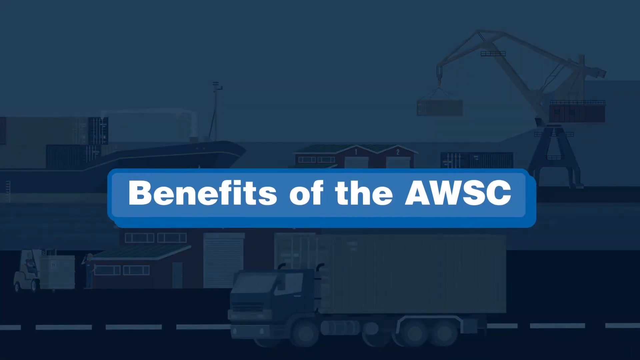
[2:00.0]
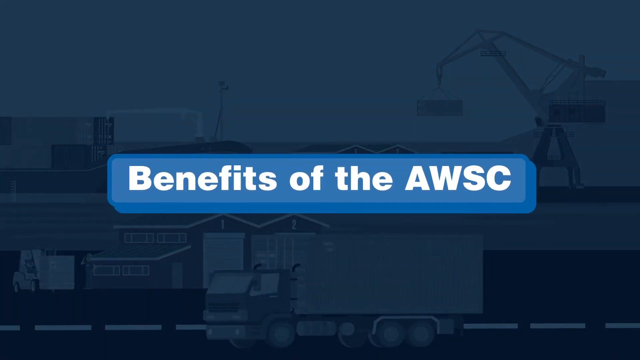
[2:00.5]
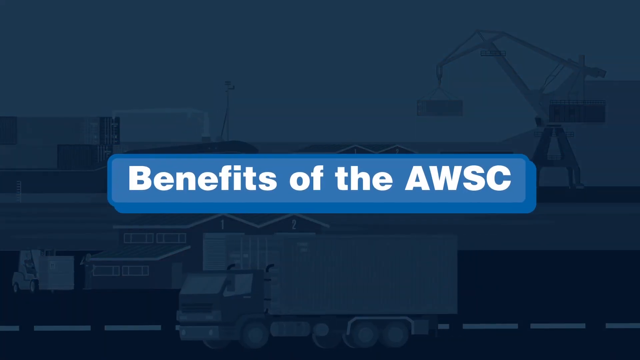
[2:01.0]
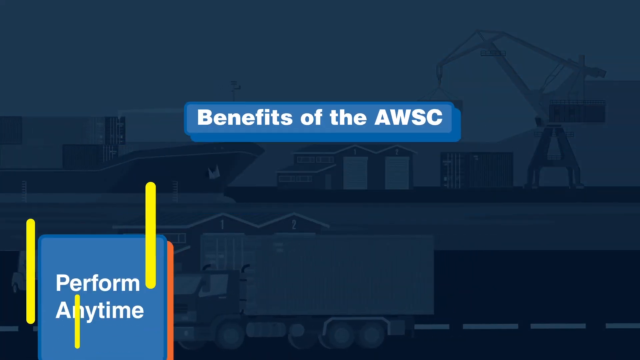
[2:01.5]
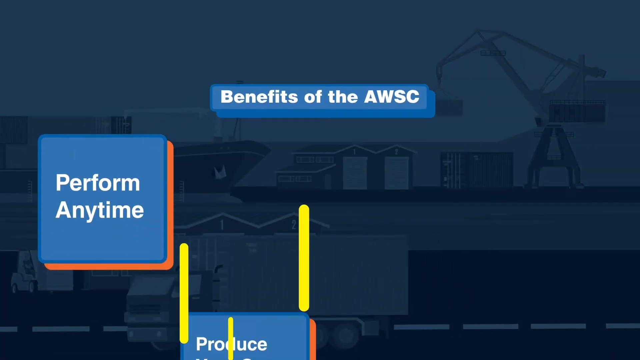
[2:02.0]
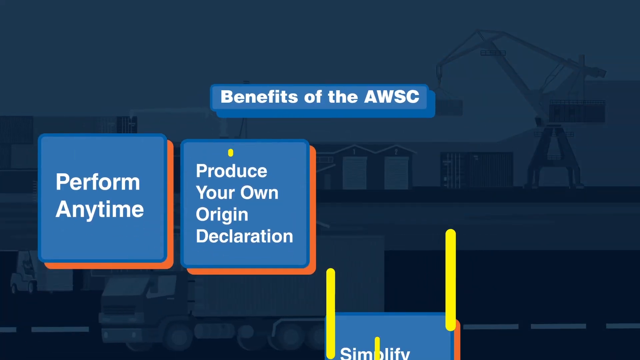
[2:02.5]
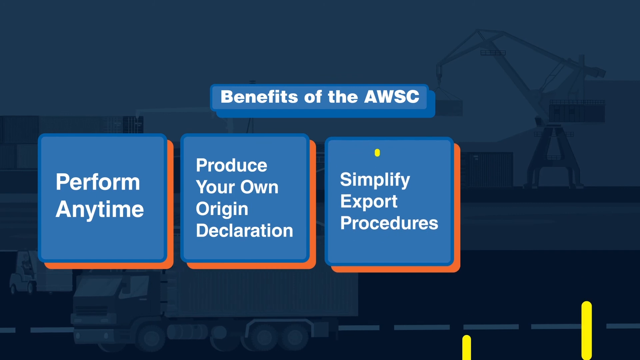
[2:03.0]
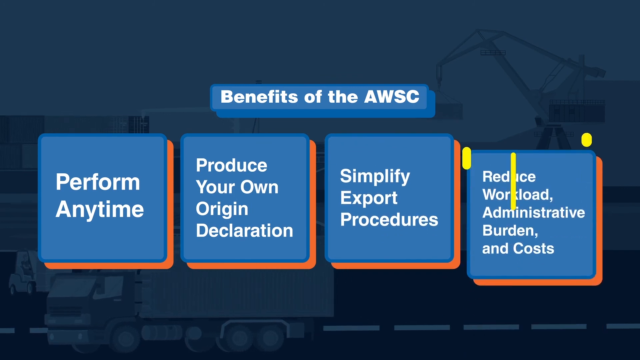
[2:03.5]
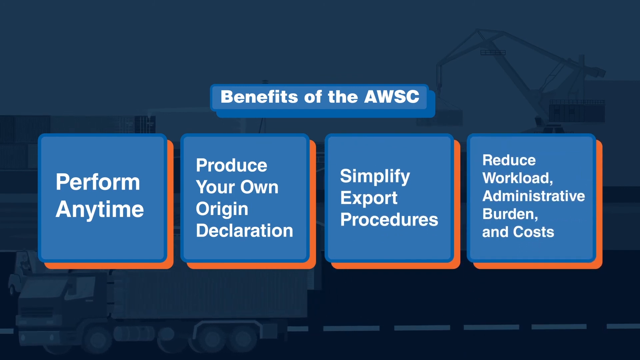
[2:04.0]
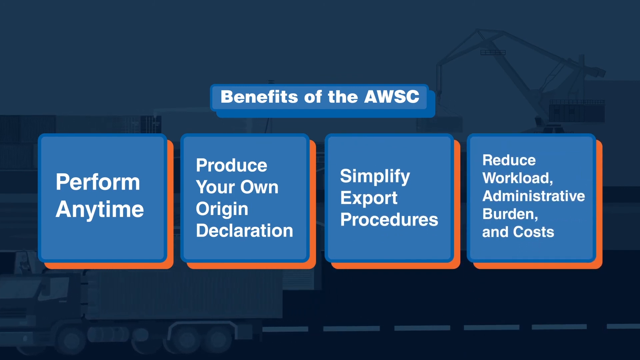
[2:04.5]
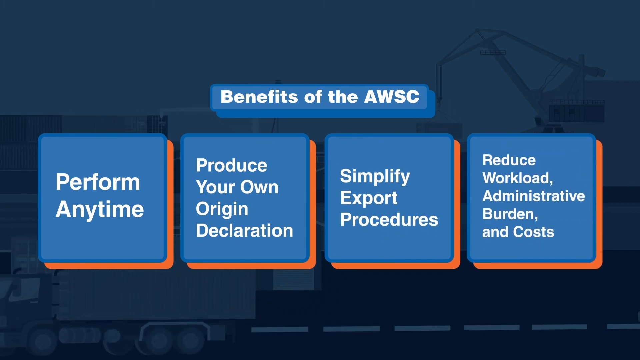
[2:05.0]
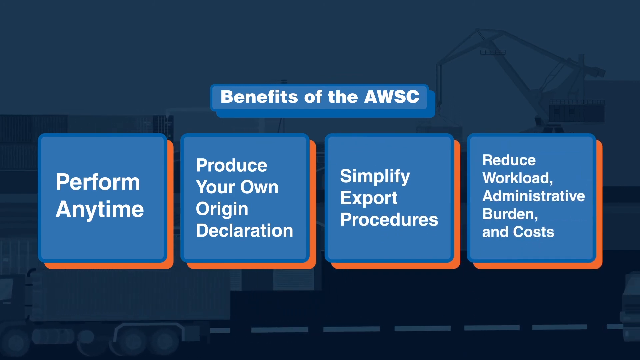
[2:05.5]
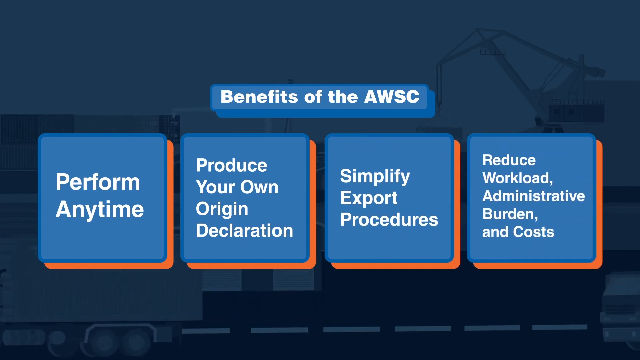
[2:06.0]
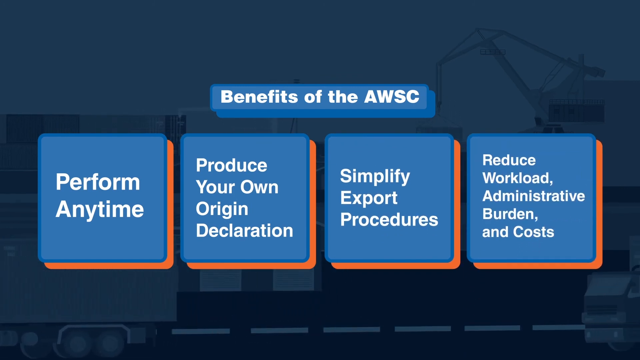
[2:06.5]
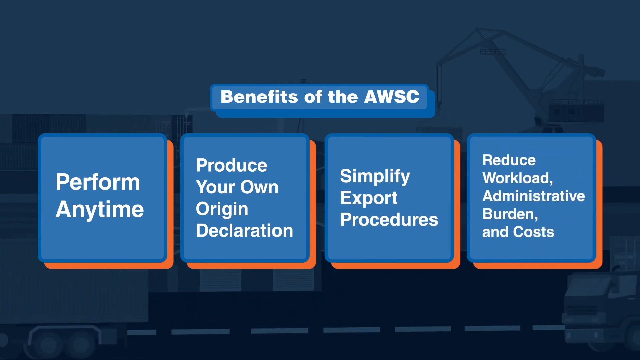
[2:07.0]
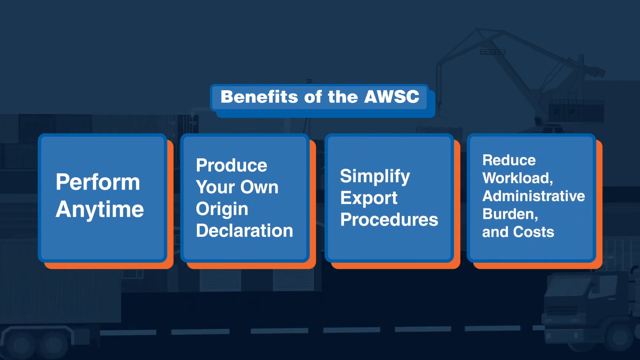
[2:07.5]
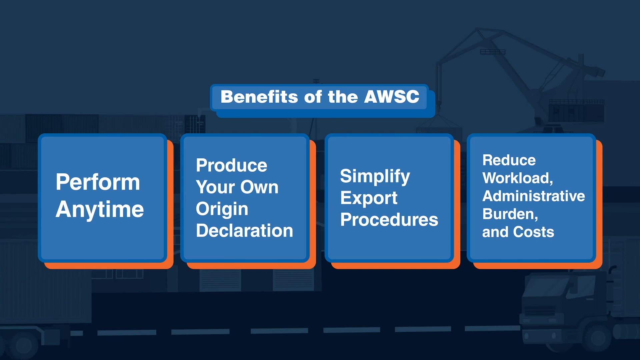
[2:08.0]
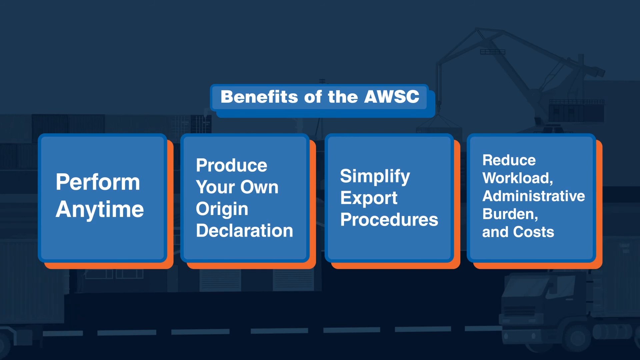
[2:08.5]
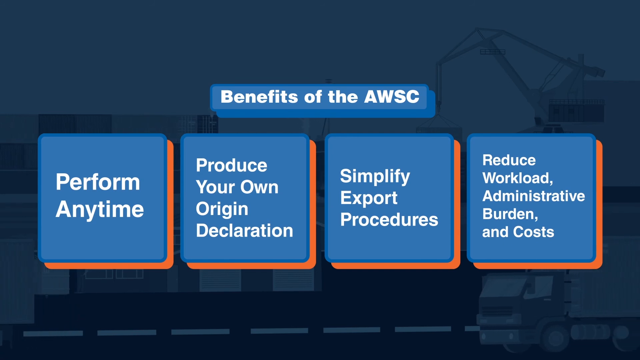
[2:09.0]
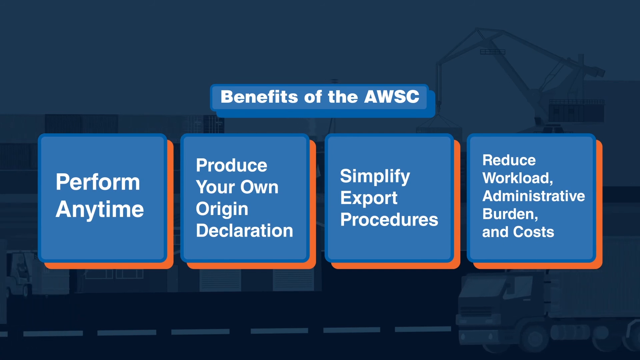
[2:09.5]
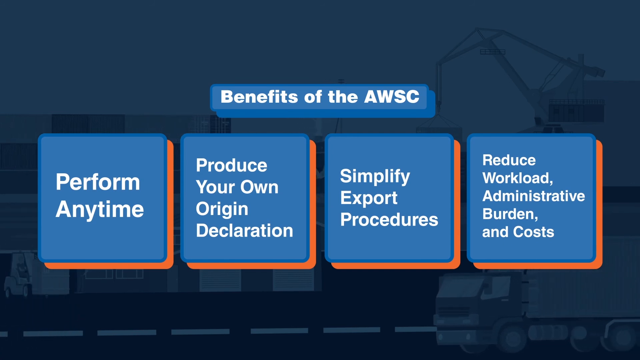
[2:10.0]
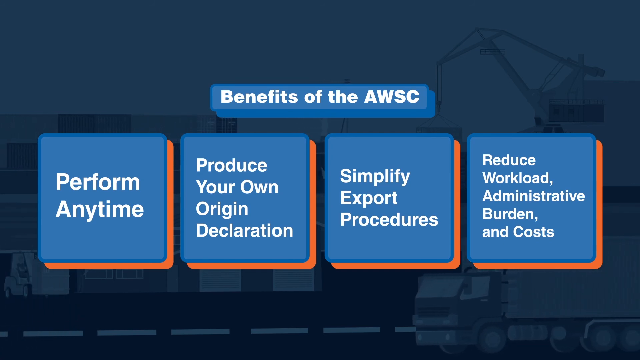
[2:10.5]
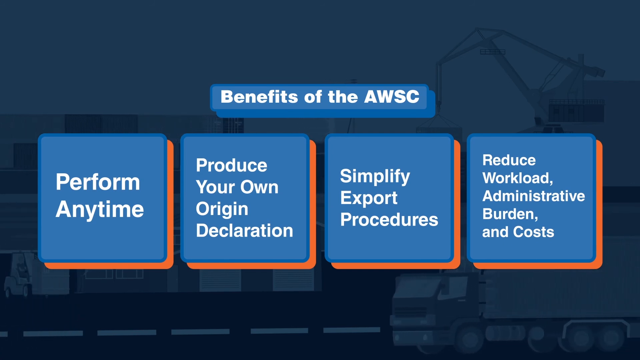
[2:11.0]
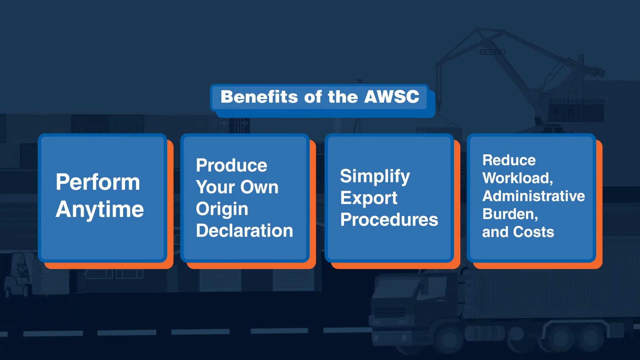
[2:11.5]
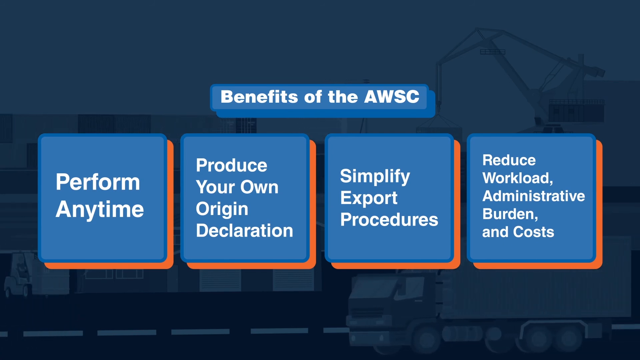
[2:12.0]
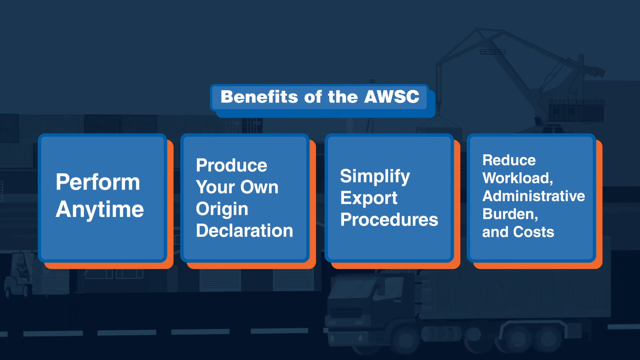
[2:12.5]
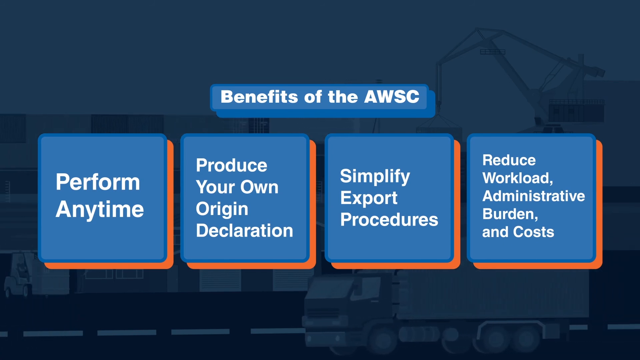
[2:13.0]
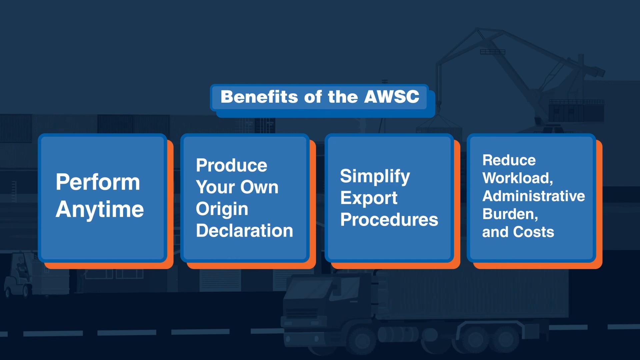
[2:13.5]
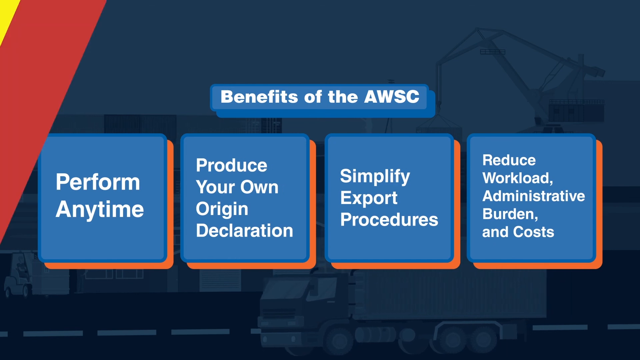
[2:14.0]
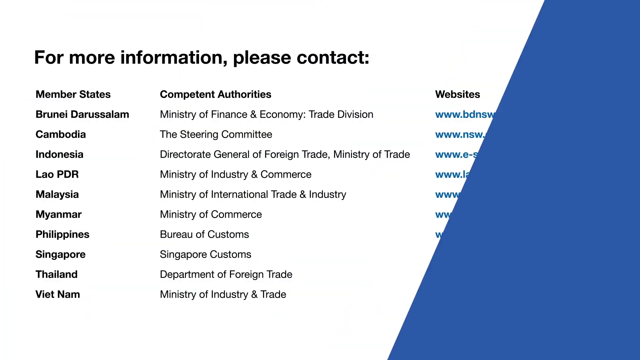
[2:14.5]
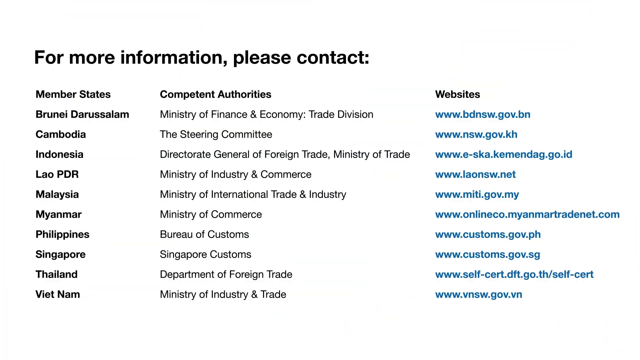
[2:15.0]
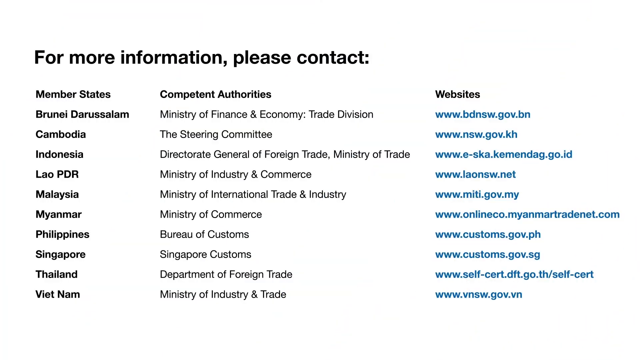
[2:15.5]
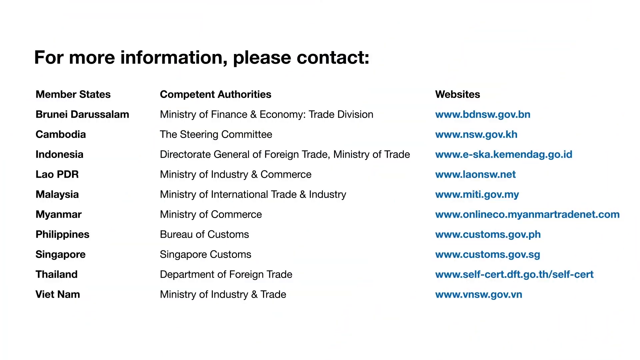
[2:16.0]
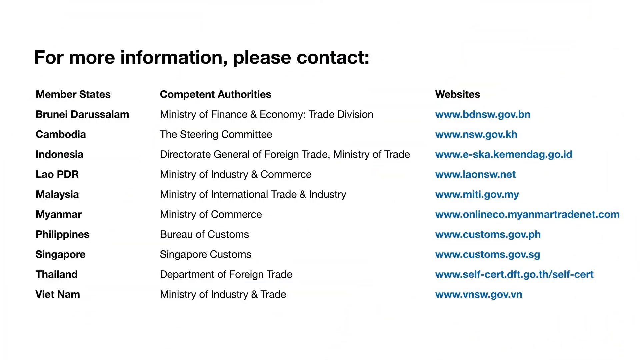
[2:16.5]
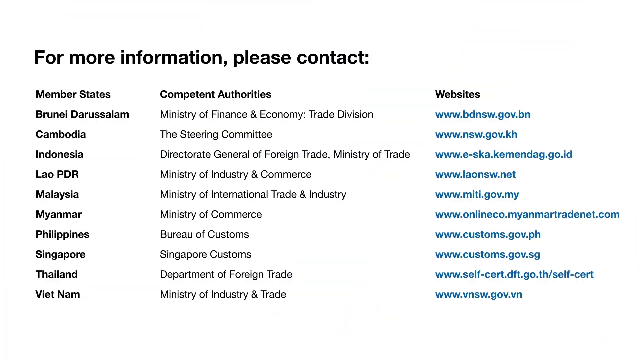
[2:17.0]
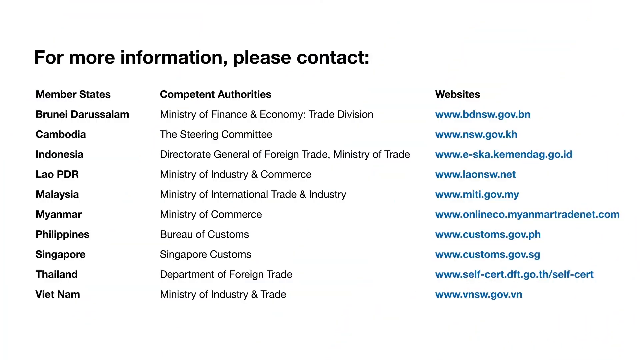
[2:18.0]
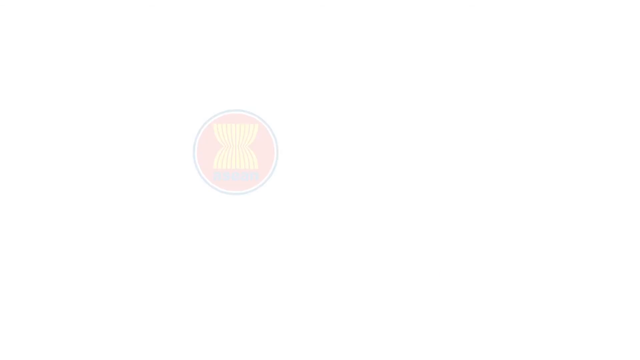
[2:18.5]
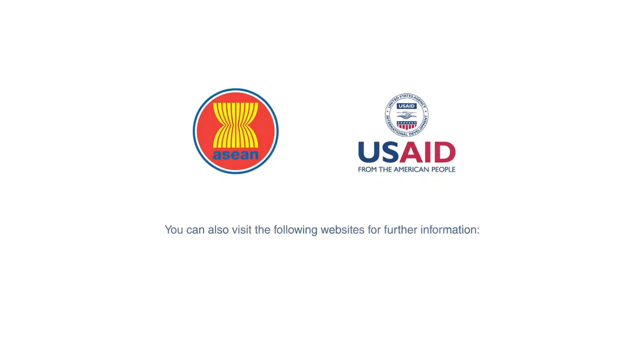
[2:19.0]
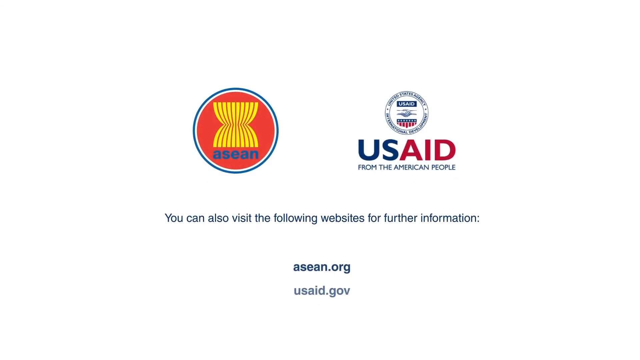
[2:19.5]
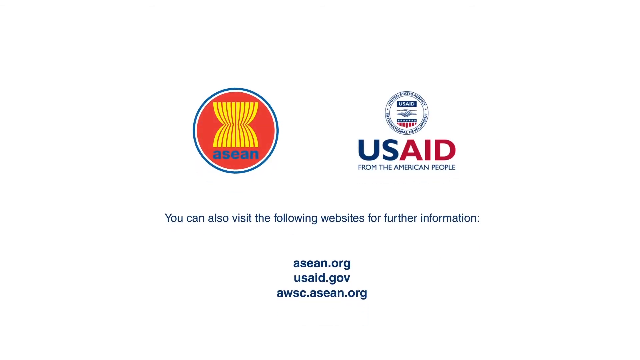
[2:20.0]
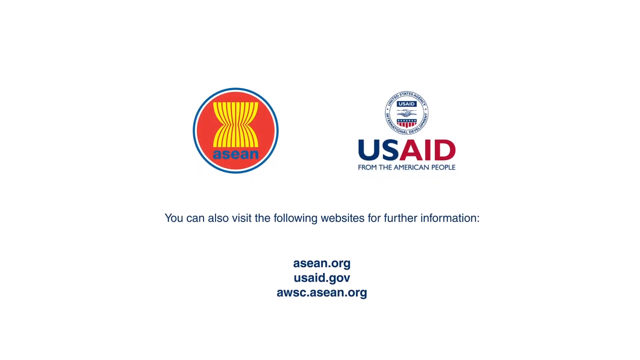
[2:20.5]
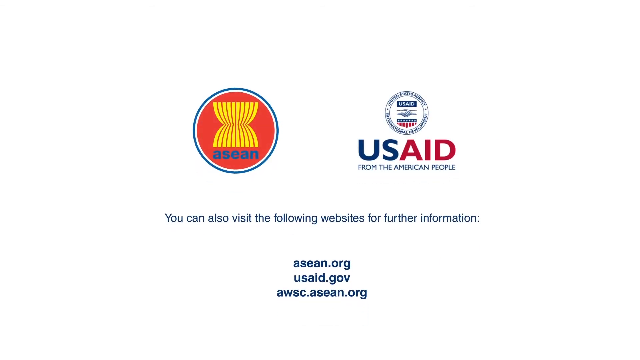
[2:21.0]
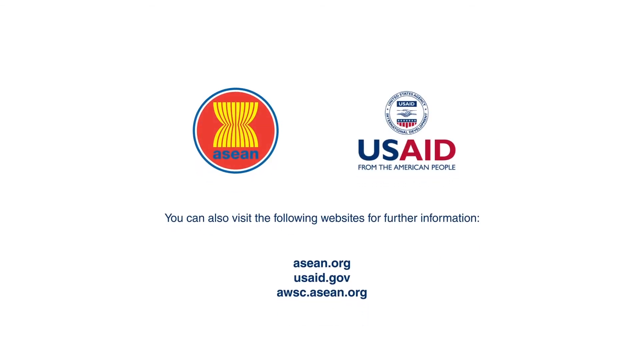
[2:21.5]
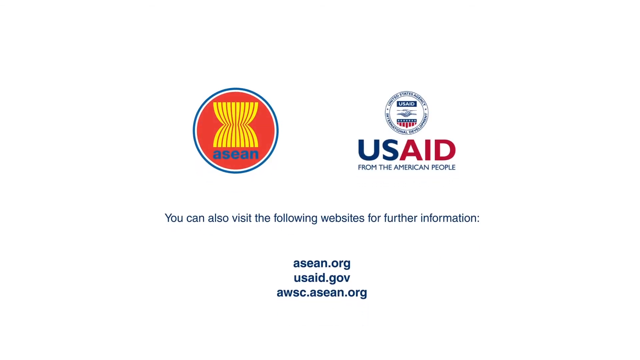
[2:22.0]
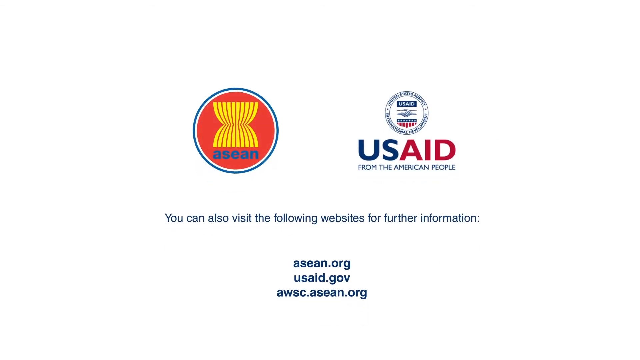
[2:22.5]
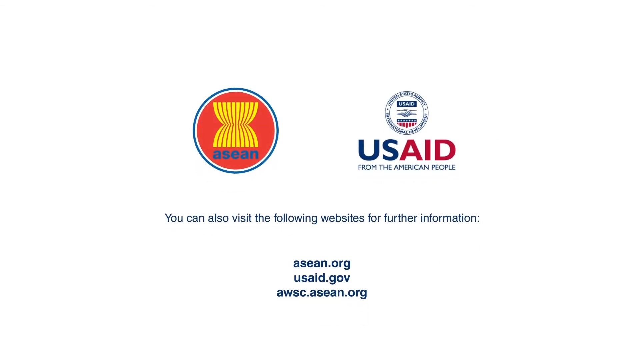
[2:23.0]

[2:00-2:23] The video returns to the port, where a boat, a truck, a crane carrying a yellow container, and a warehouse are visible. Text in the center of the screen reads "Benefits of the AWSC". Four boxes then appear, reading "Perform any time", "Produce your own origin declaration", "Simplify export procedures" and "Reduce workload, administrative burden, and costs". The video seems to end with a slide that says "For more information, please contact", with three columns below headed "Member States", "Competent Authorities" and "Websites". The first column lists countries such as Cambodia, Indonesia, Malaysia, Philippines, Singapore, Thailand and Vietnam. The second column lists ministries, such as "Ministry of Industry and Commerce", "Ministry of International Trade and Industry" and "Ministry of Commerce", among others. The websites column shows various government and commercial pages that may be related to the program.